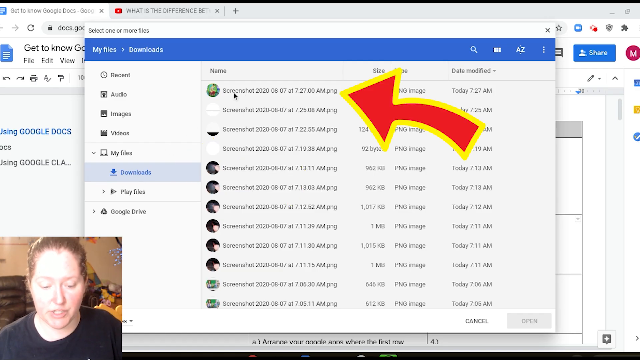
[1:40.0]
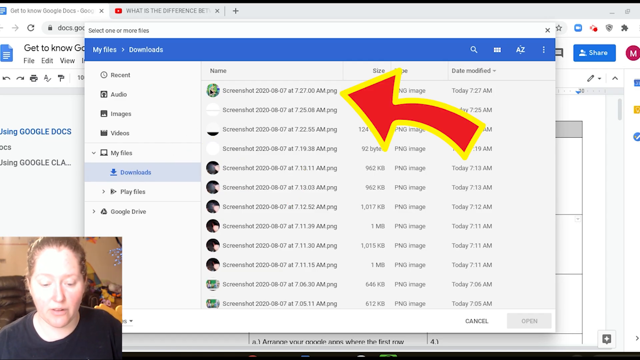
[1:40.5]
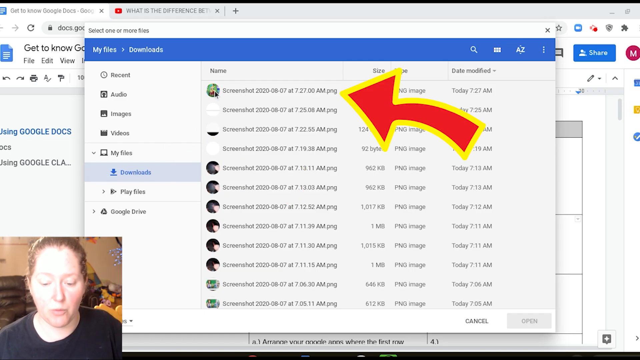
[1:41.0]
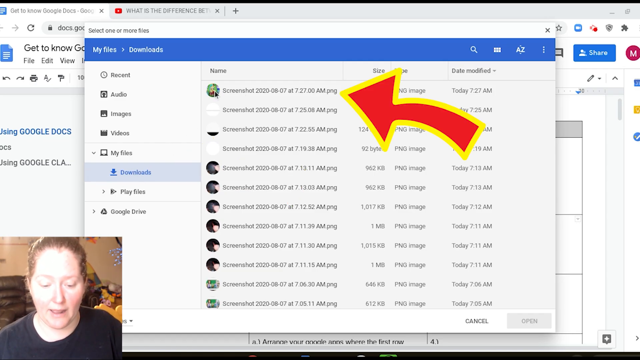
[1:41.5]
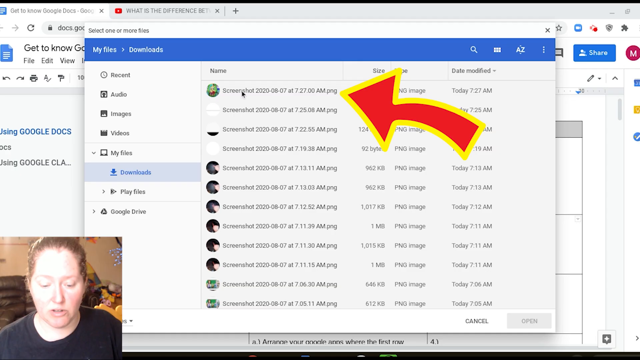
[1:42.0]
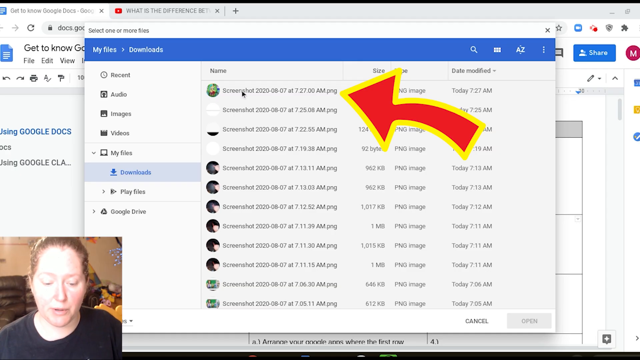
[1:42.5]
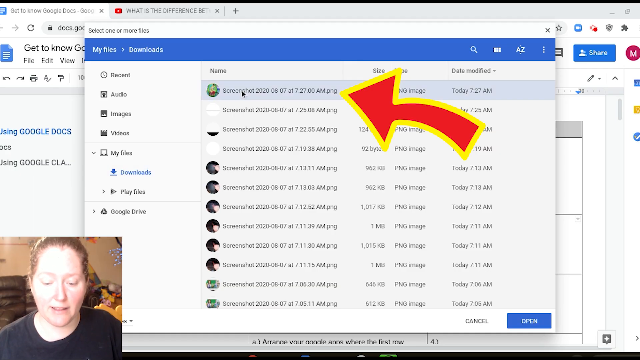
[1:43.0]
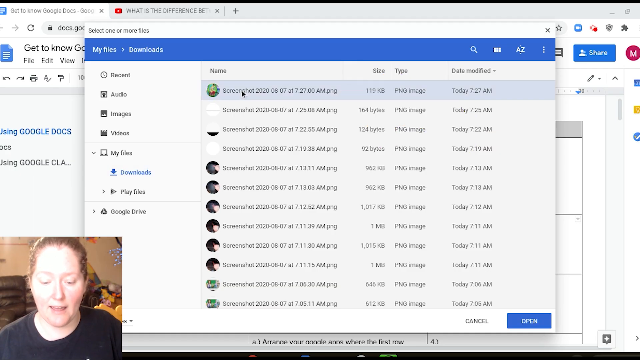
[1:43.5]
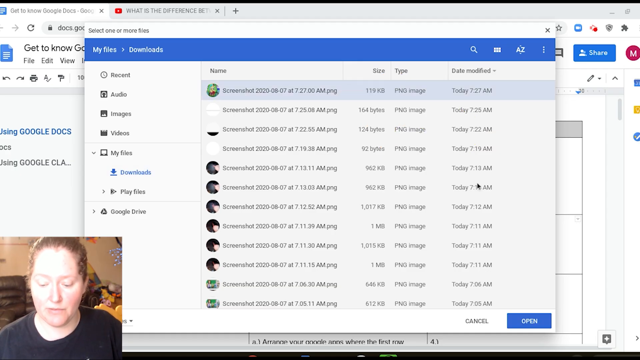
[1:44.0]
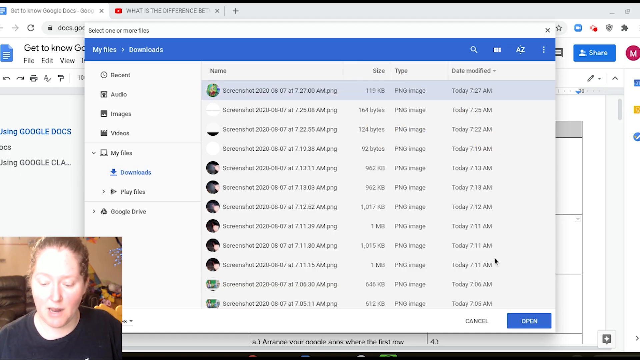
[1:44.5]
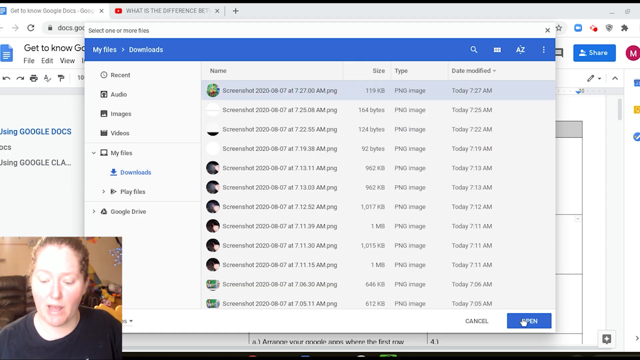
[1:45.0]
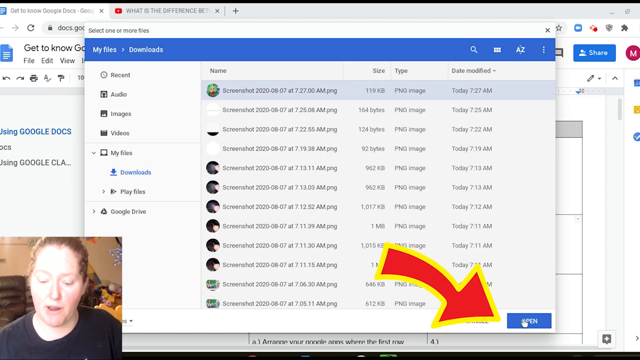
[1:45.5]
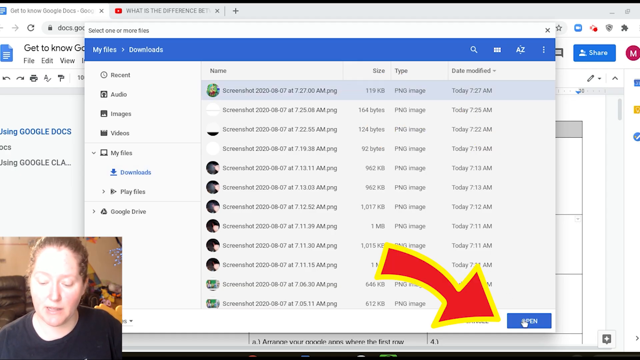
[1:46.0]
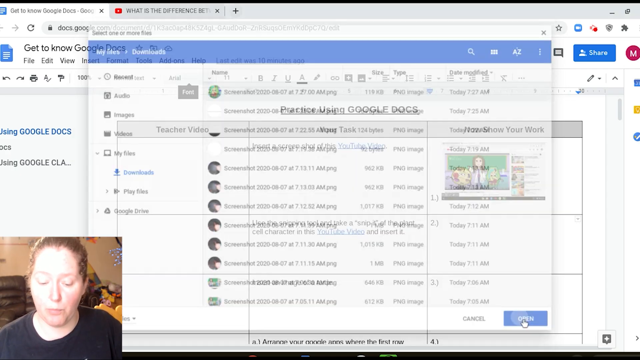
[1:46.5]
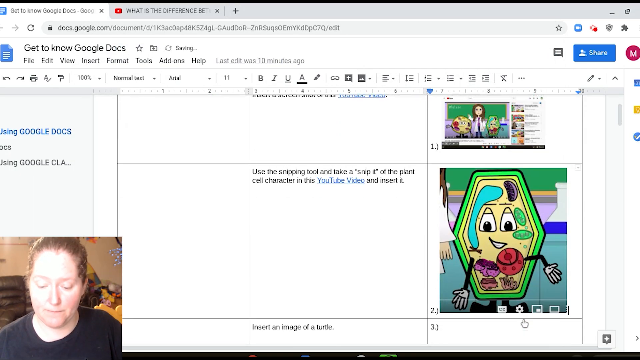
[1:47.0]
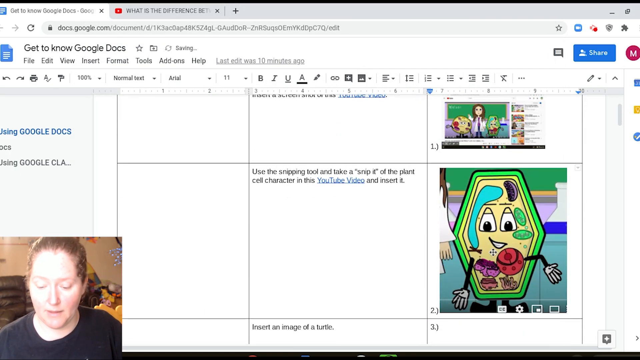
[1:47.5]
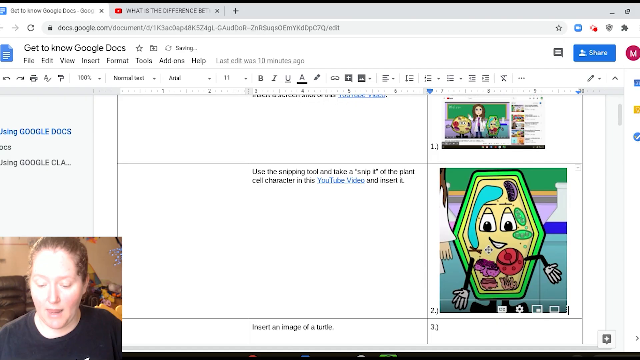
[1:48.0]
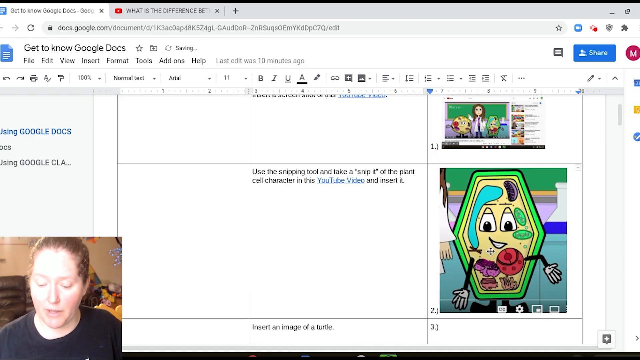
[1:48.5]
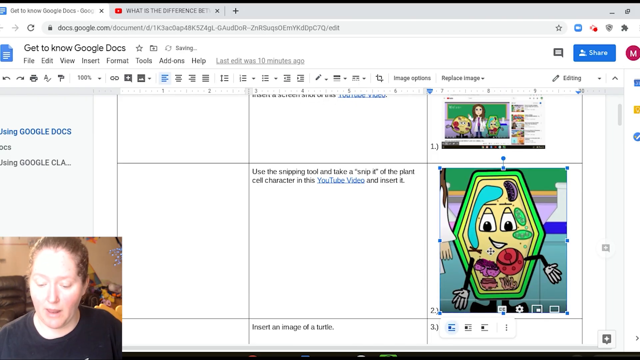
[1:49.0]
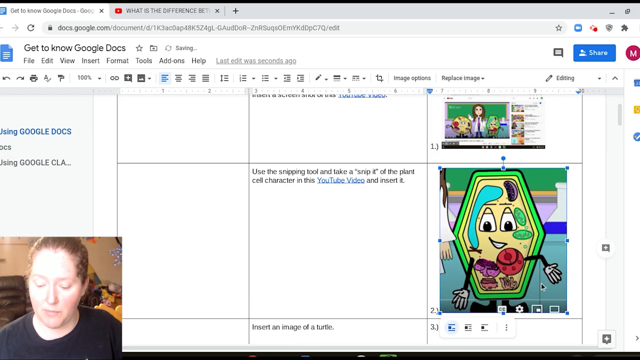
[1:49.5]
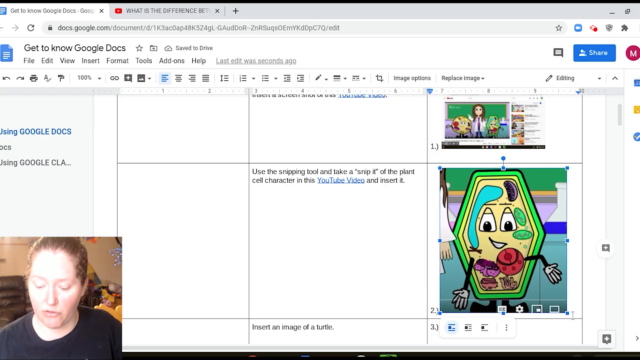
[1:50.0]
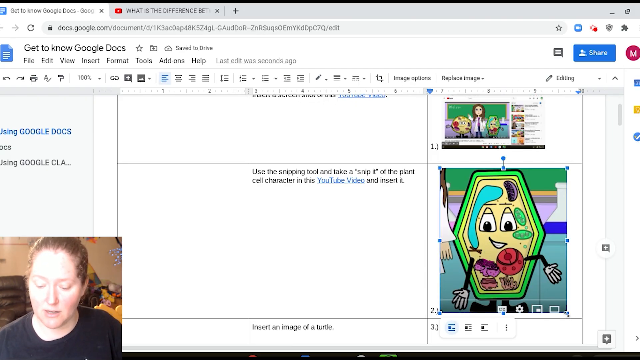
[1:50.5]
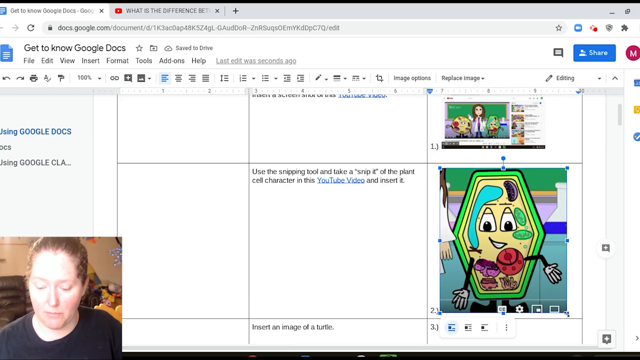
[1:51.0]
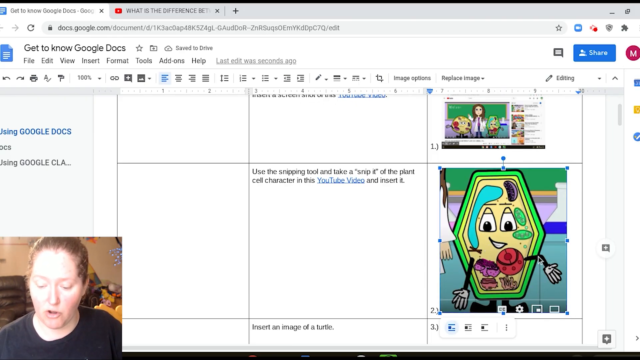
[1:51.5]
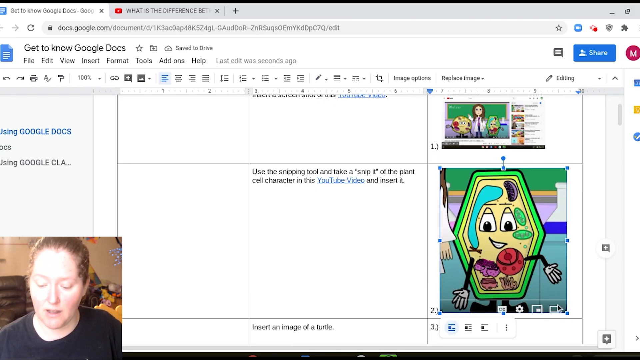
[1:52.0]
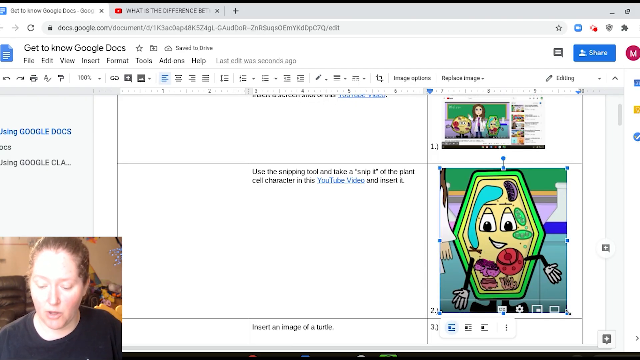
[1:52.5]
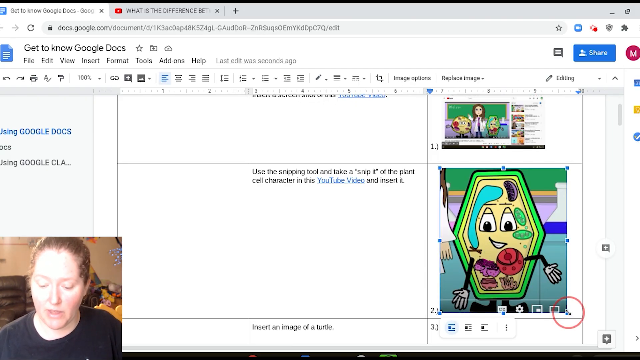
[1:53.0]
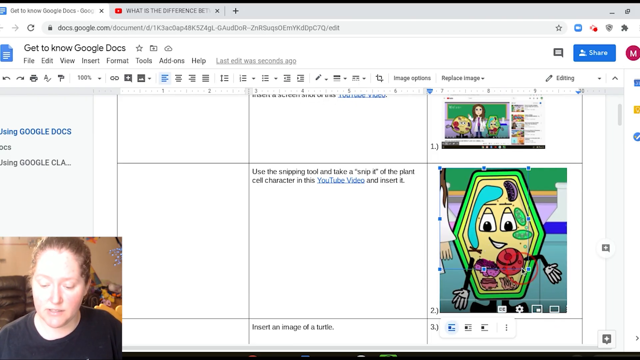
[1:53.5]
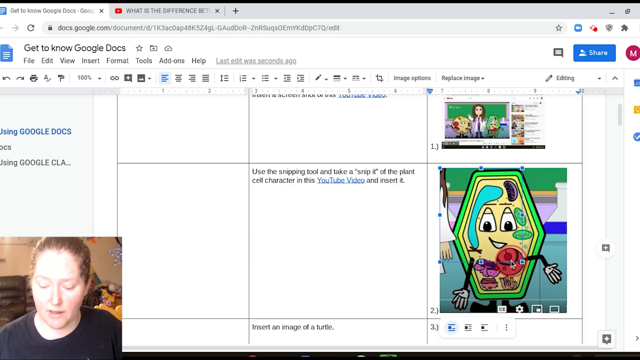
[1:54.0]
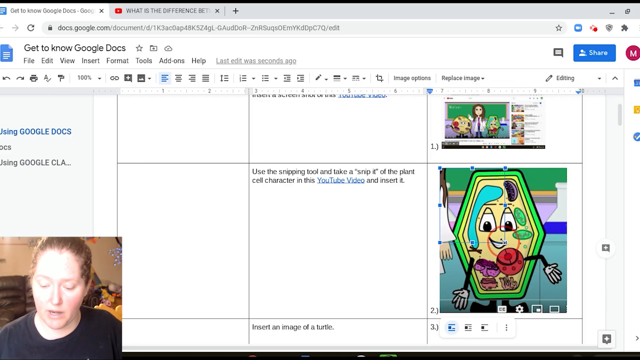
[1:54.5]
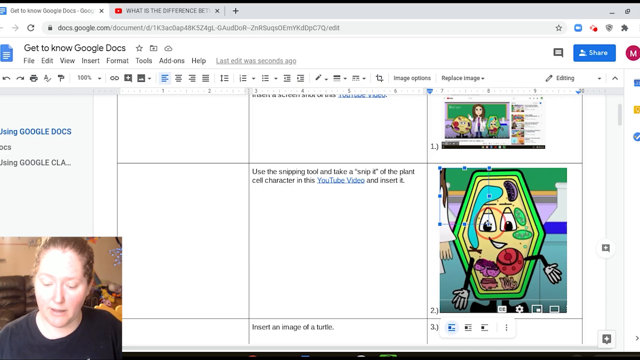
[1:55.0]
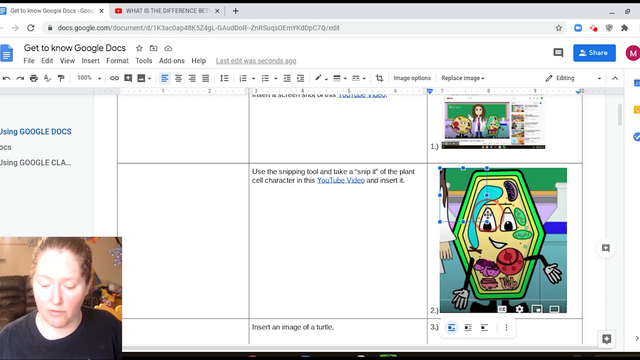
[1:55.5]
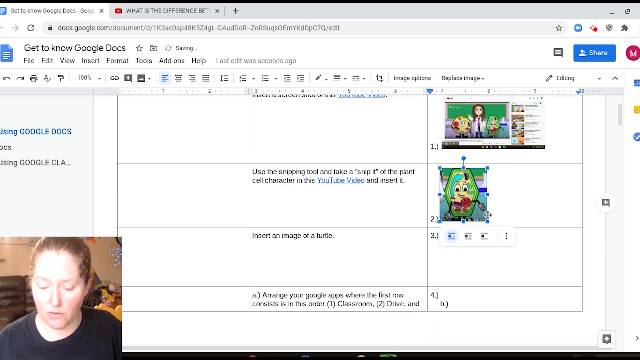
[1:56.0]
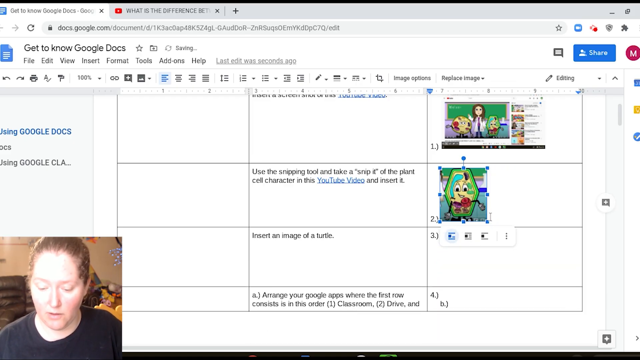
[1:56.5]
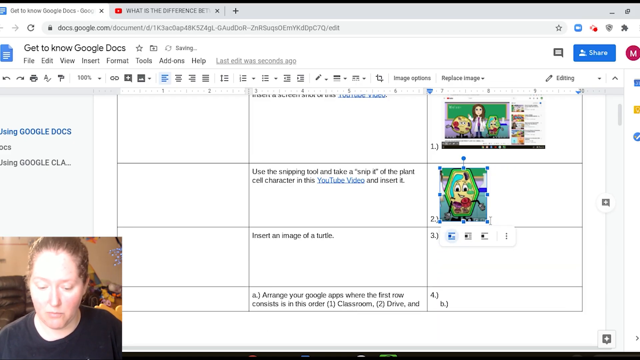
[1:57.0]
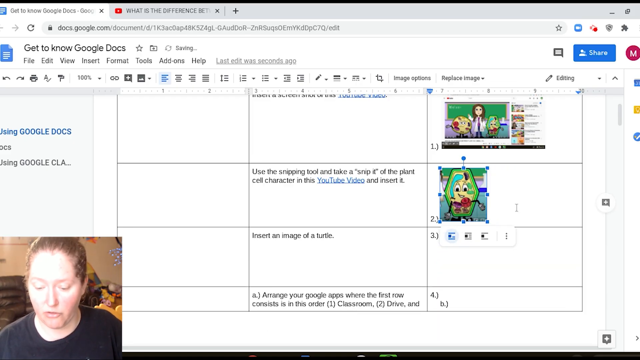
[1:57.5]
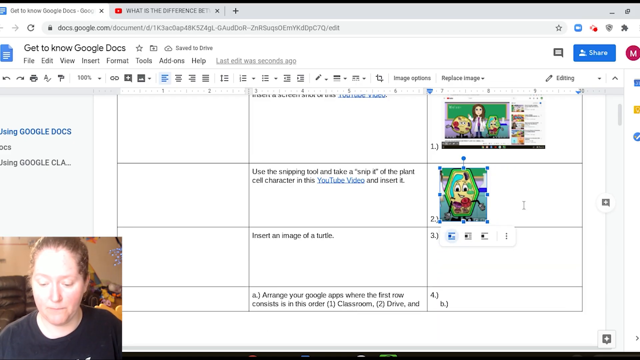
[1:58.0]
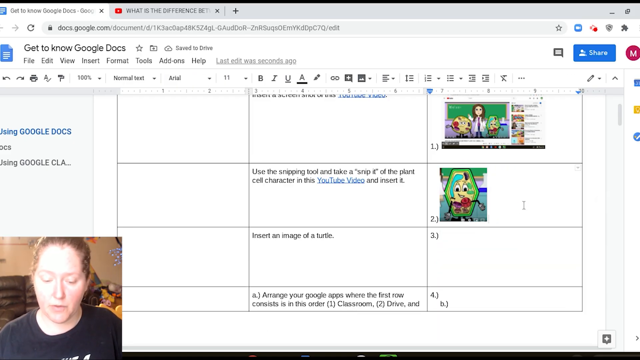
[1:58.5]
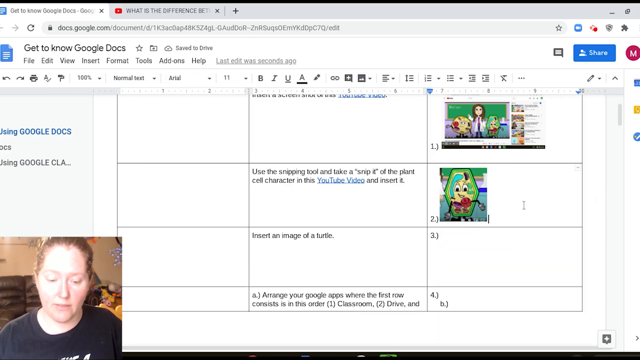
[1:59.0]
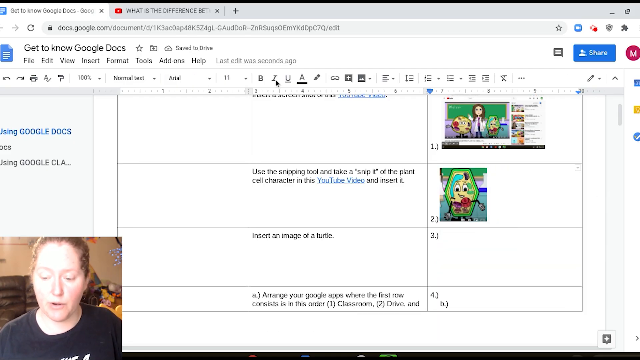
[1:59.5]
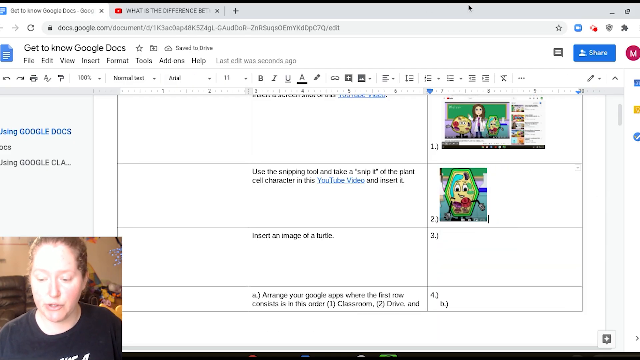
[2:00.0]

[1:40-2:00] She clicks on the picture and clicks open, and it opens into the box where she wanted it. It is the same screenshot of the cell character she took, and she shrinks it down so it is a lot smaller and does not look too big on the row. She seems to be recording herself going through an assignment, possibly one she made herself as a teacher giving examples of how to work with a computer.